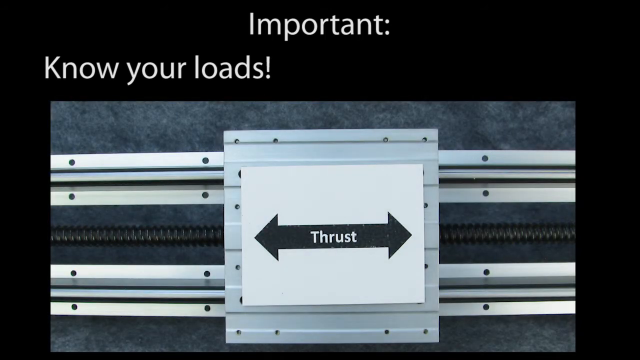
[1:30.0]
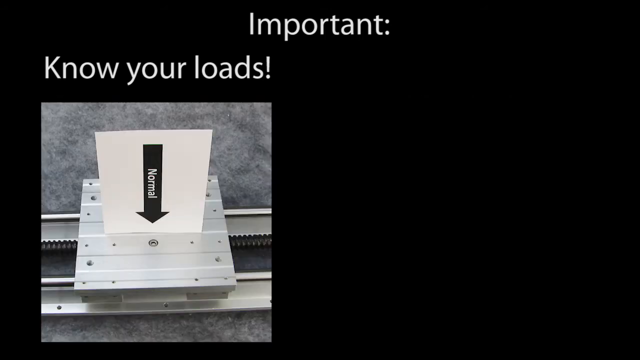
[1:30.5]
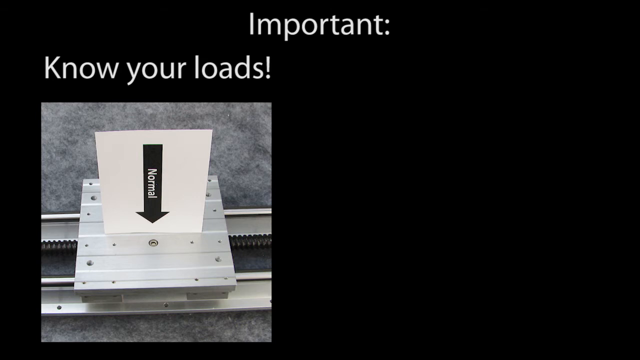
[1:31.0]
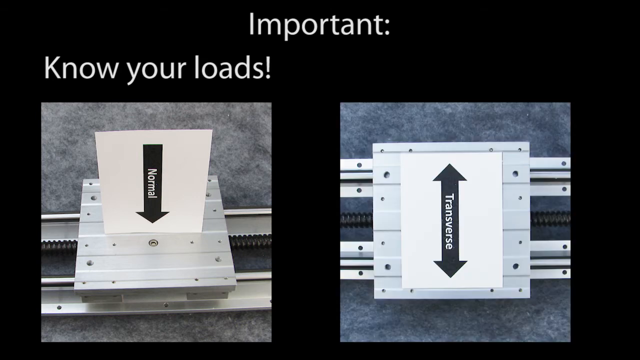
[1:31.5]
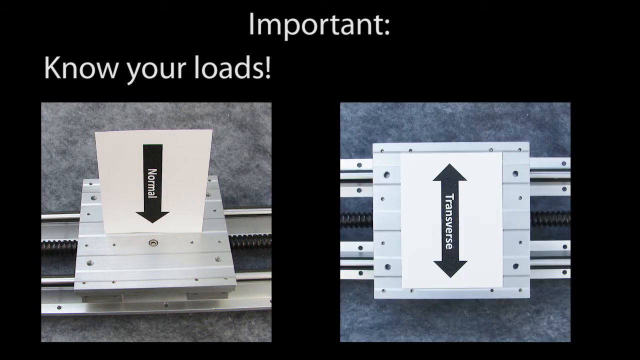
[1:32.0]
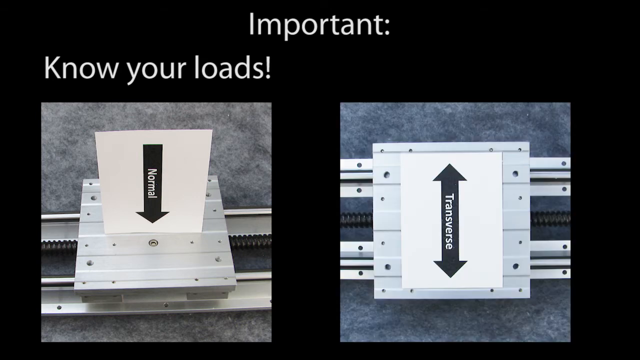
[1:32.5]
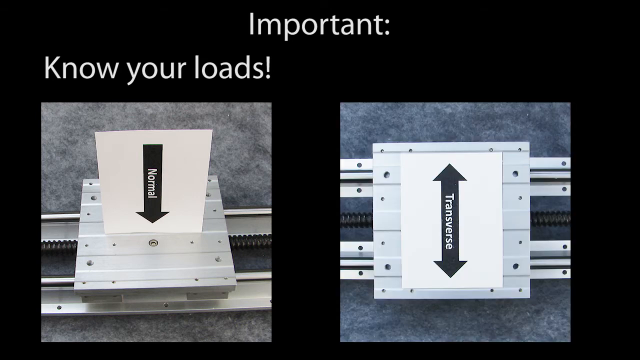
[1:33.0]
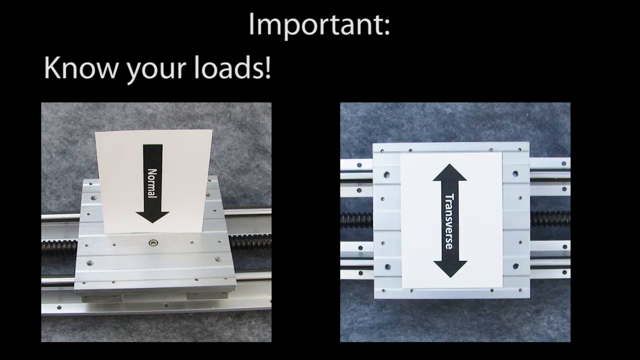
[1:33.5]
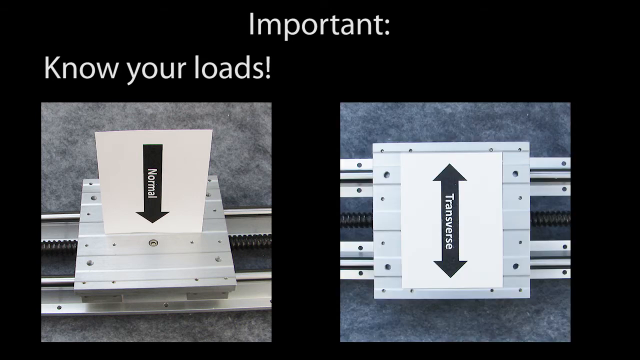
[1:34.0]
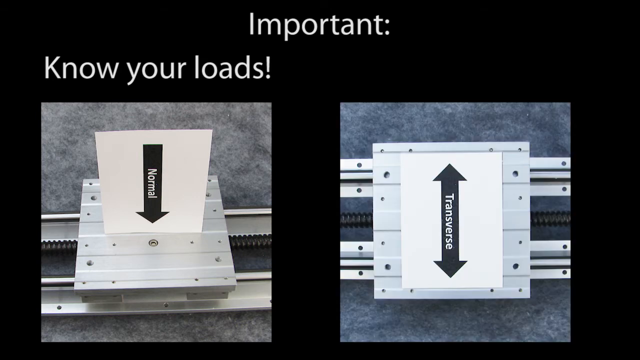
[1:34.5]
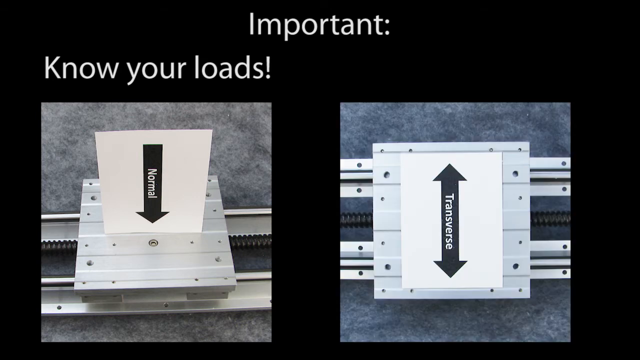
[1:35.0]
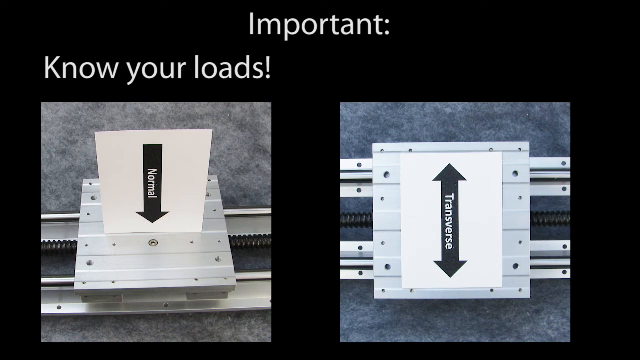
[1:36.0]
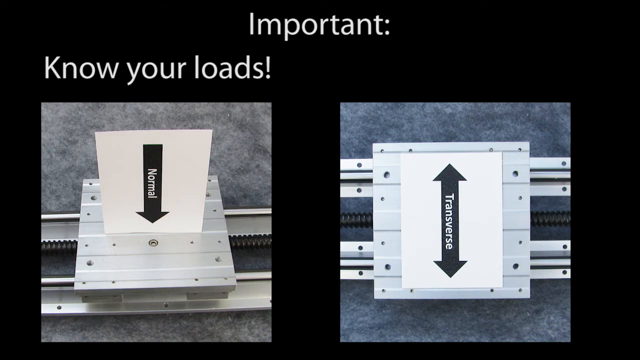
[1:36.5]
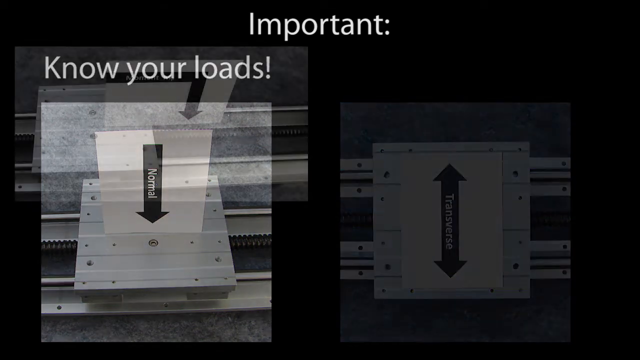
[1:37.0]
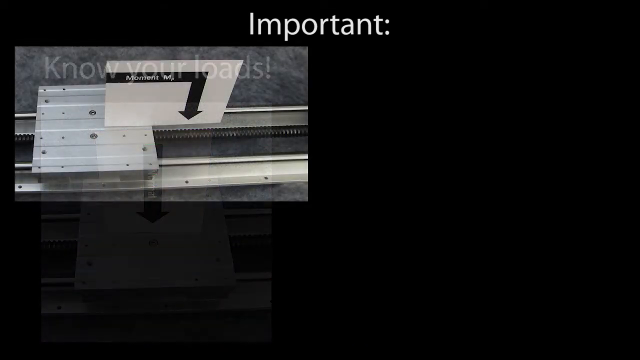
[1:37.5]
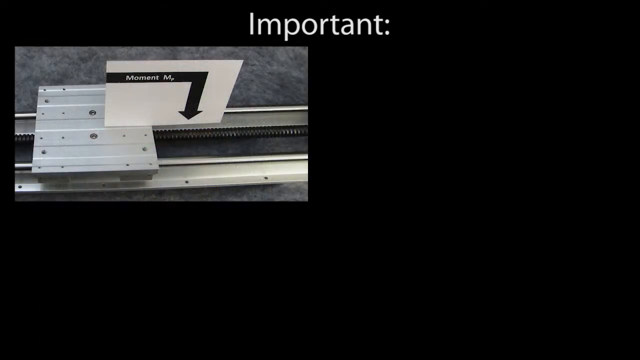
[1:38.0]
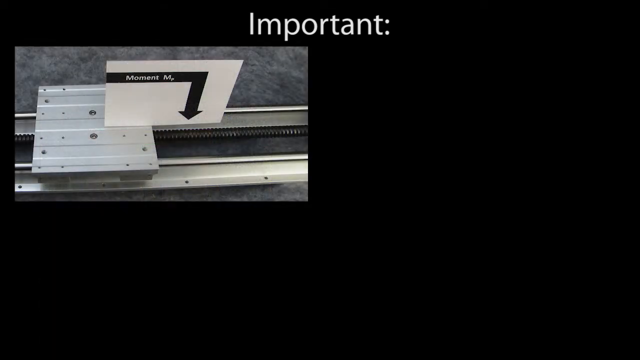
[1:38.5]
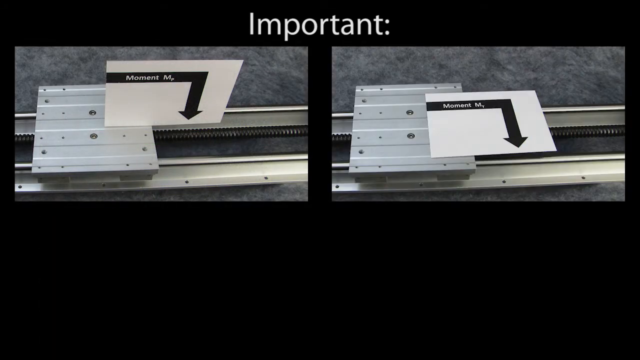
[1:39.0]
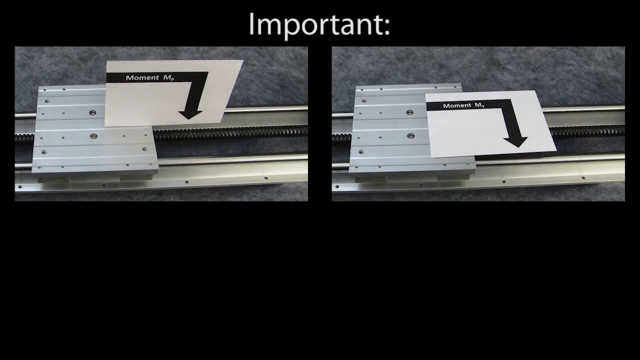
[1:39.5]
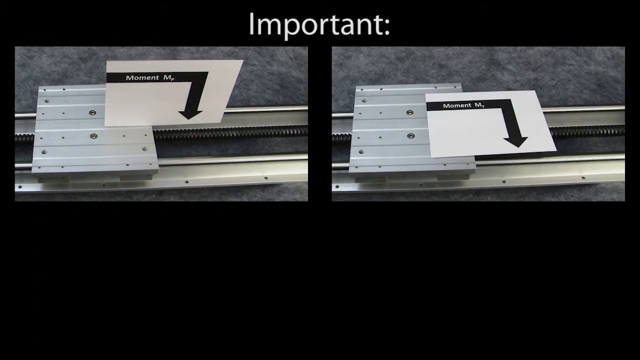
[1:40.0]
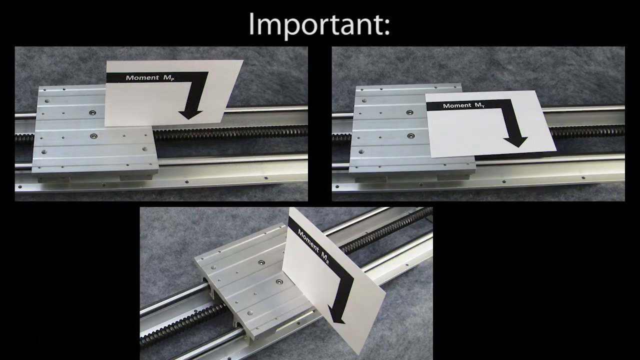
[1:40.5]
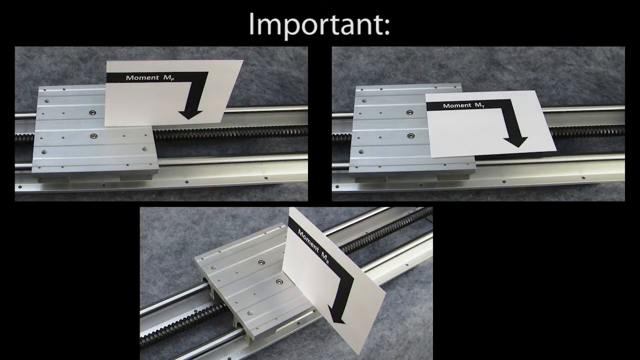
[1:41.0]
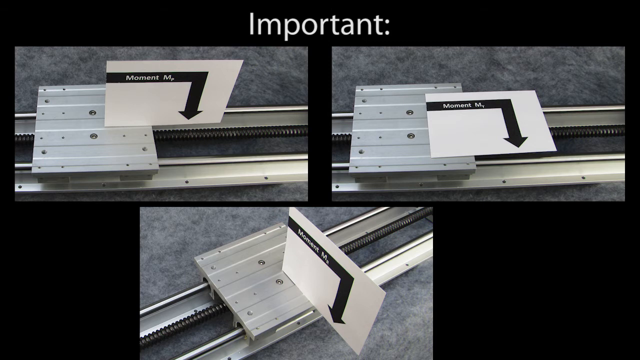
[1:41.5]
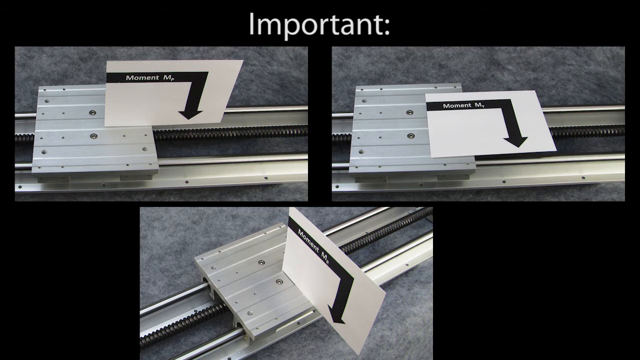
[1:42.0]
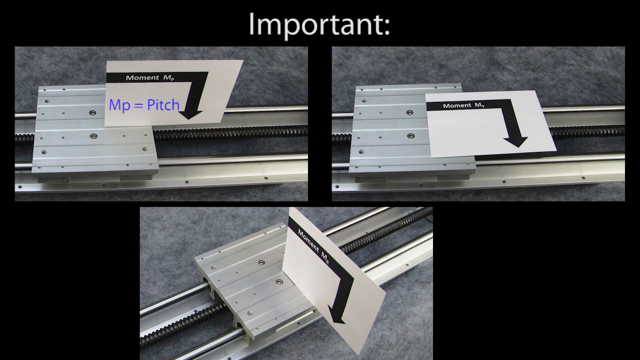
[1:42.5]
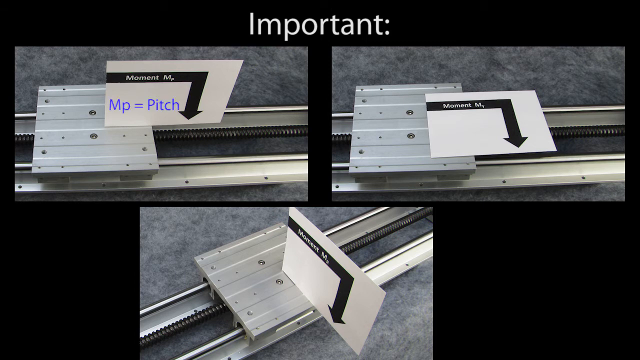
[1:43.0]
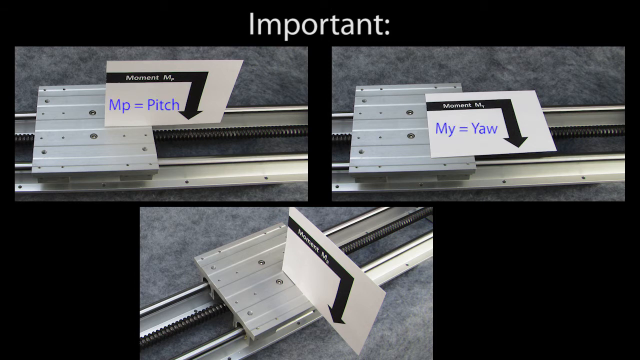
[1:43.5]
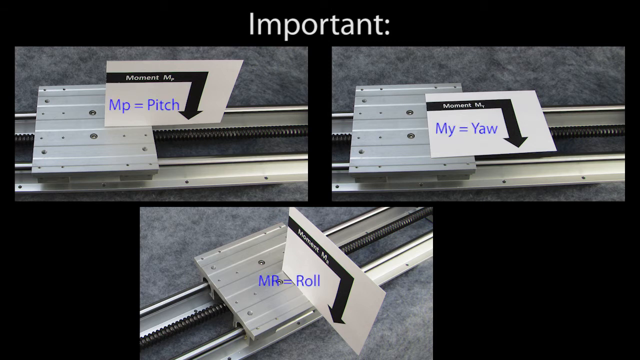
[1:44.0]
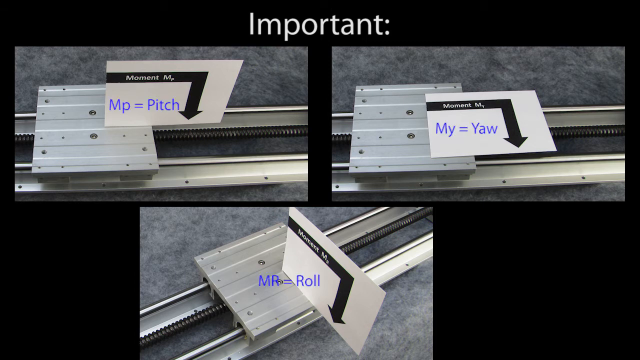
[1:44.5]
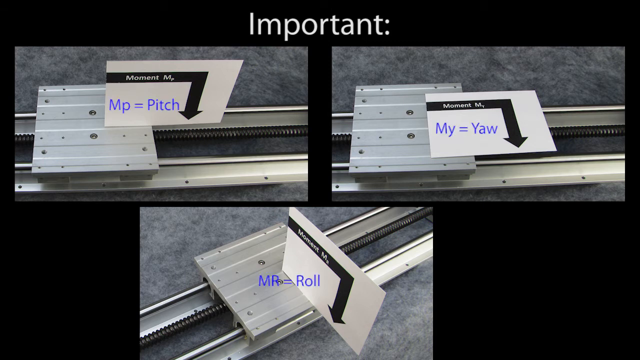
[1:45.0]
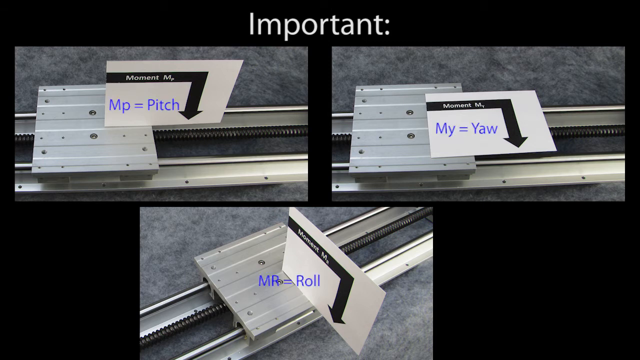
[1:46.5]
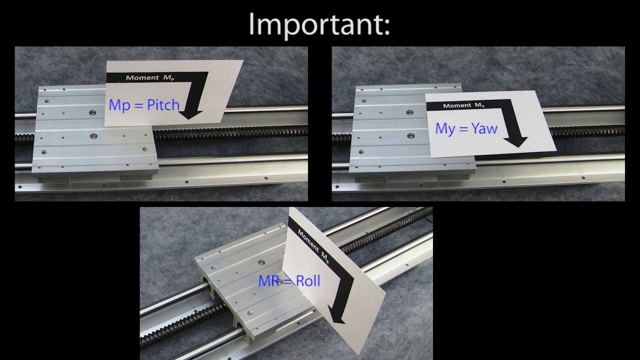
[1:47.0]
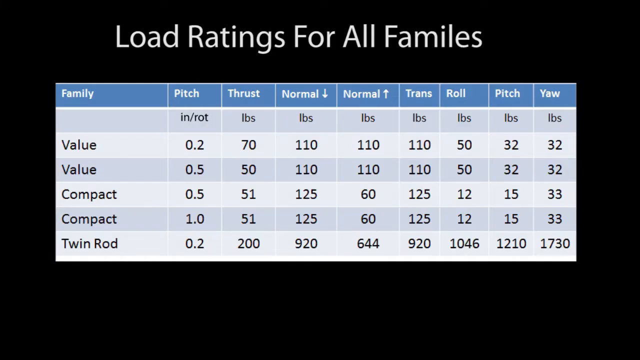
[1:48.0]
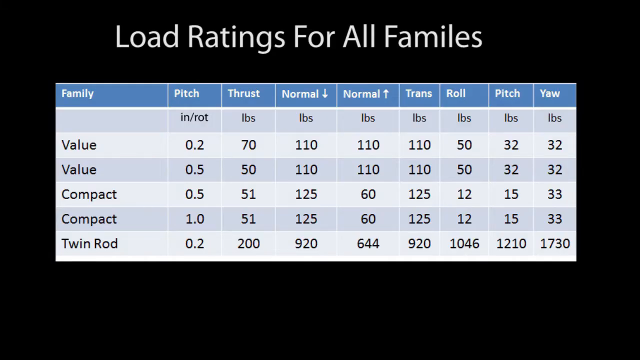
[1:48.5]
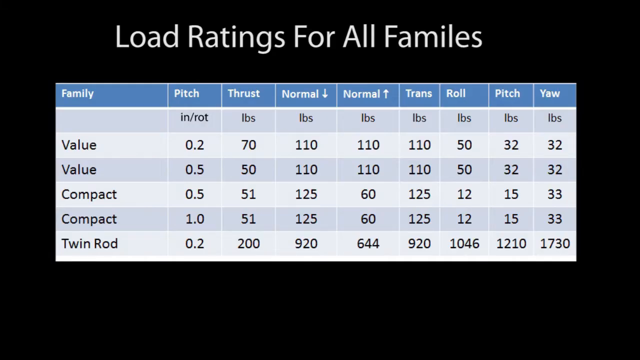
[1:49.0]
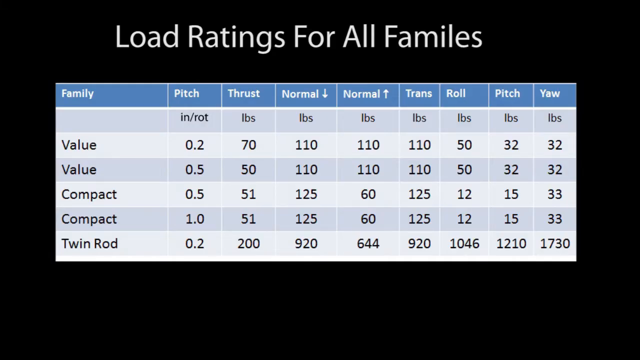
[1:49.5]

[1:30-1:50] The screen reads "important" and "know your load", then shows transverse and normal sections, along with pitch. A graph in blue over a black background shows weights in pounds for categories including value, compact and twin rod, covering thrust, roll, pitch and yaw, for all families.